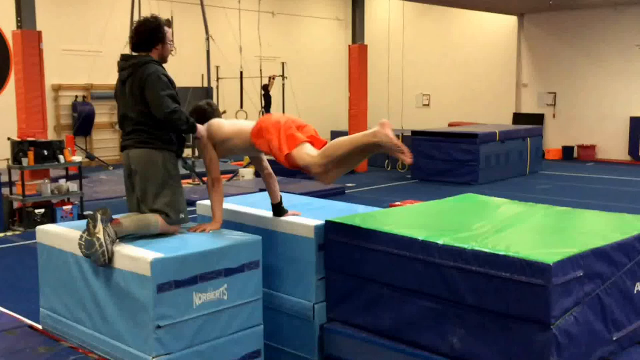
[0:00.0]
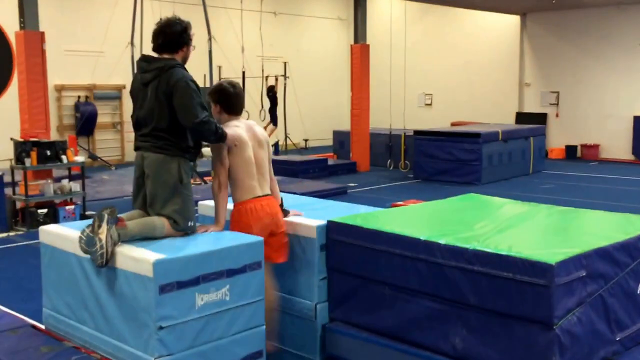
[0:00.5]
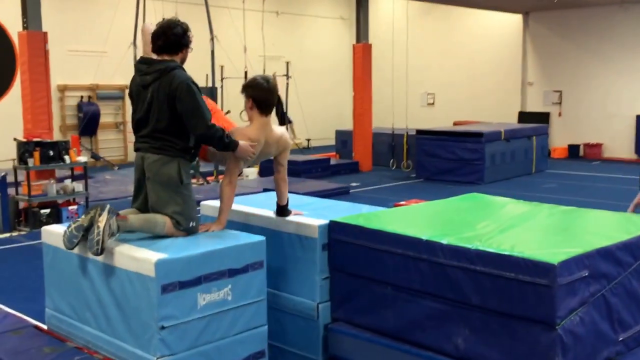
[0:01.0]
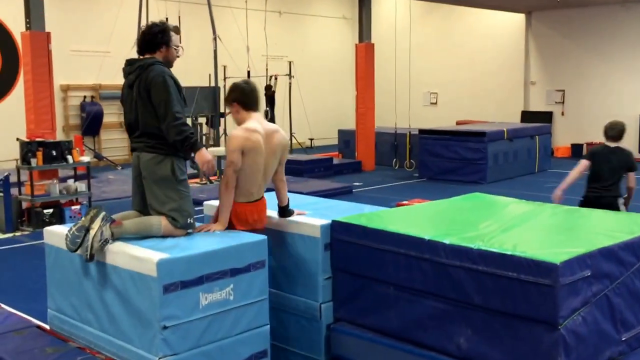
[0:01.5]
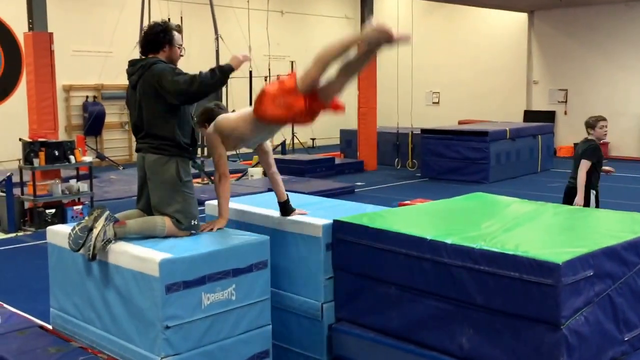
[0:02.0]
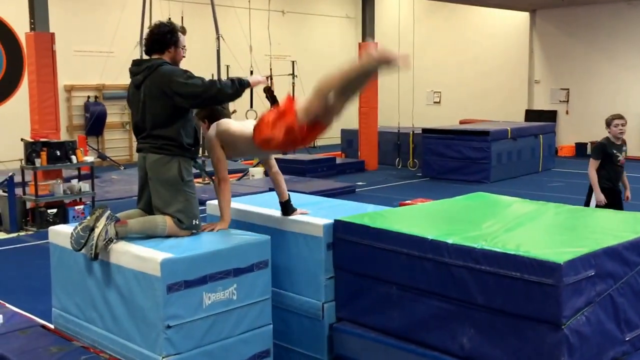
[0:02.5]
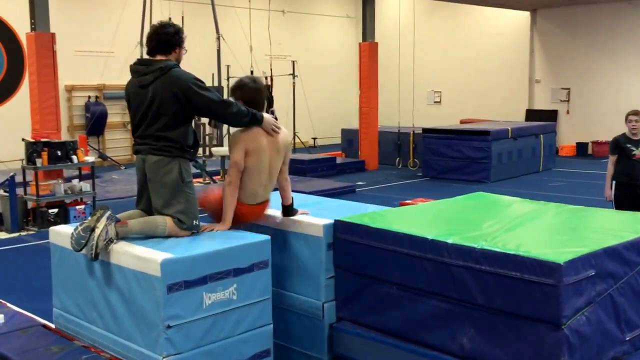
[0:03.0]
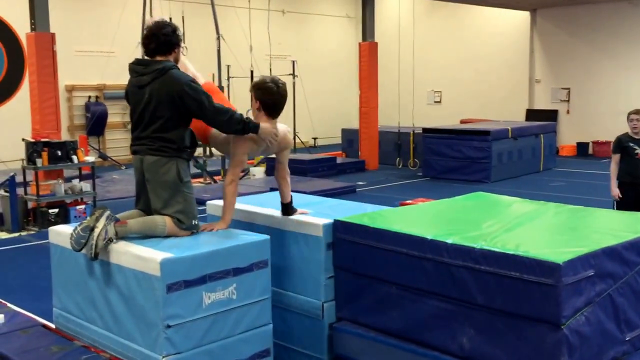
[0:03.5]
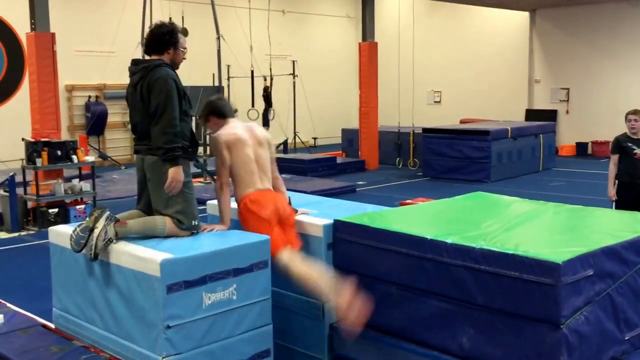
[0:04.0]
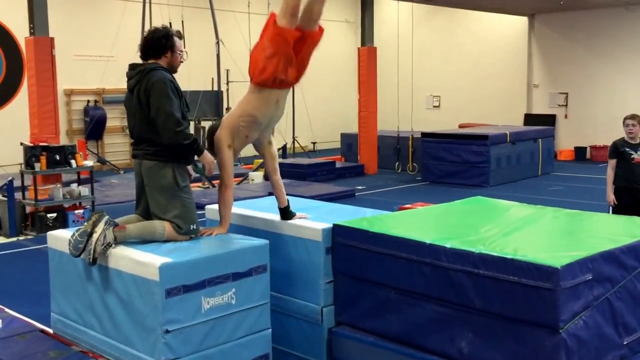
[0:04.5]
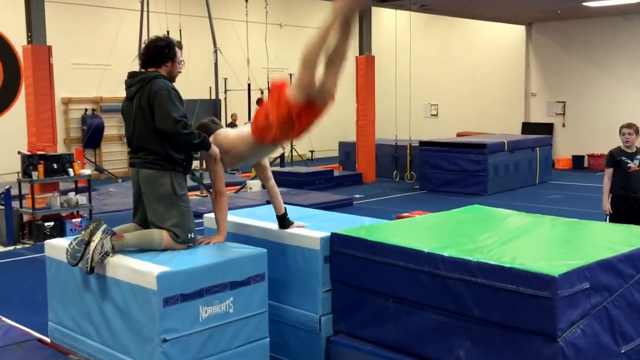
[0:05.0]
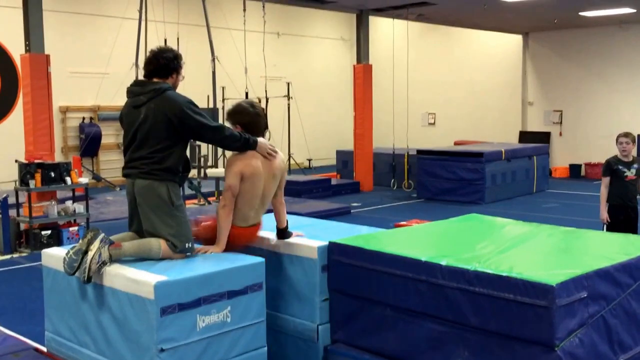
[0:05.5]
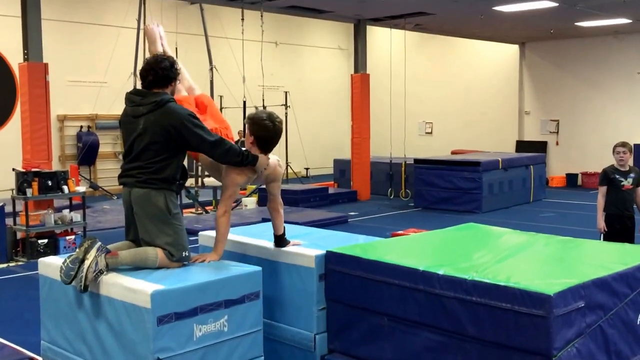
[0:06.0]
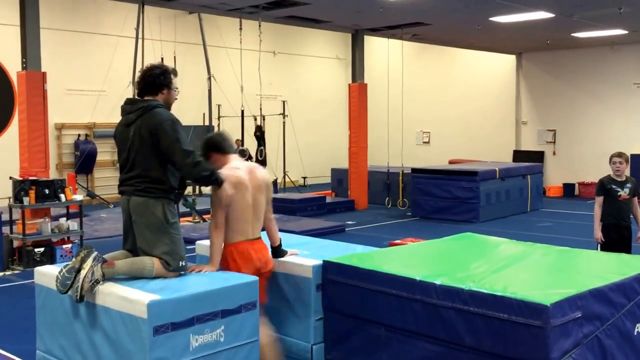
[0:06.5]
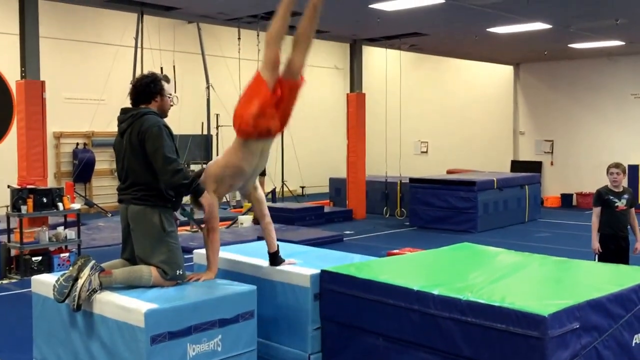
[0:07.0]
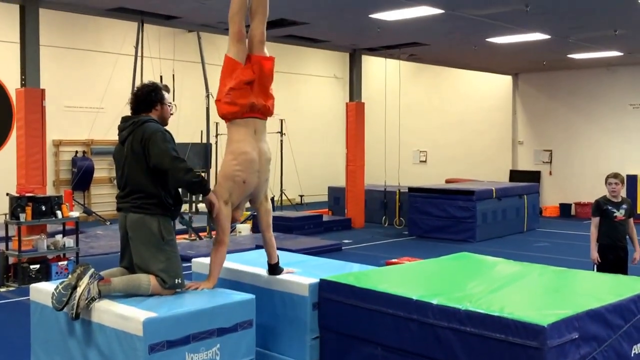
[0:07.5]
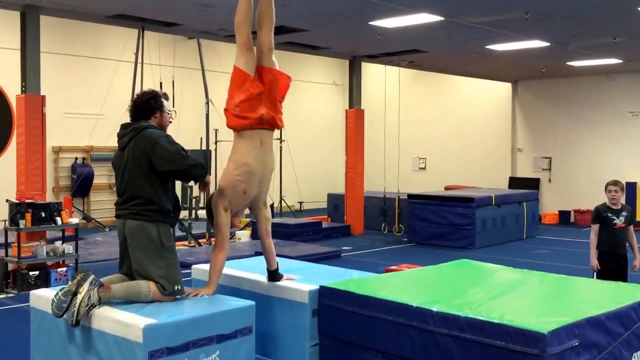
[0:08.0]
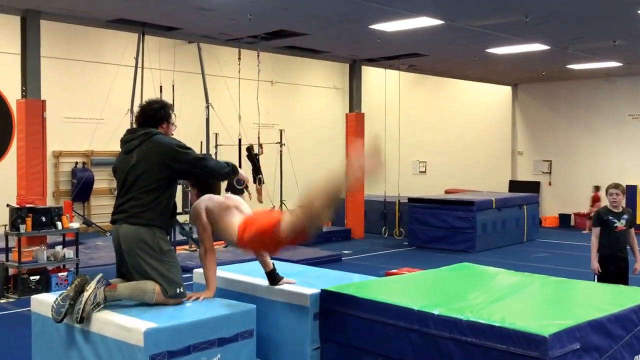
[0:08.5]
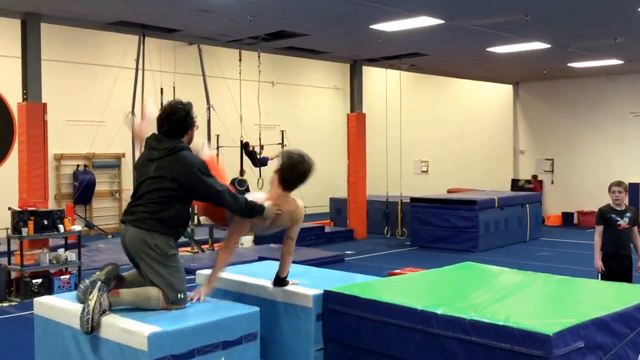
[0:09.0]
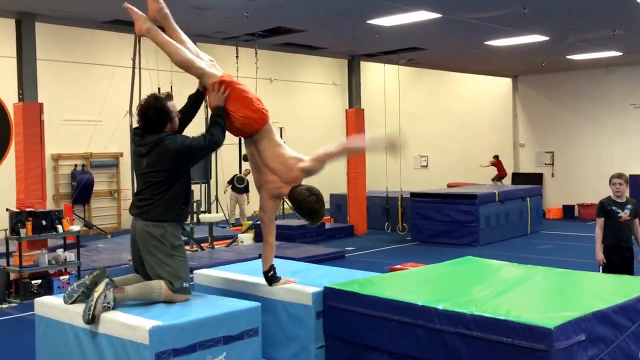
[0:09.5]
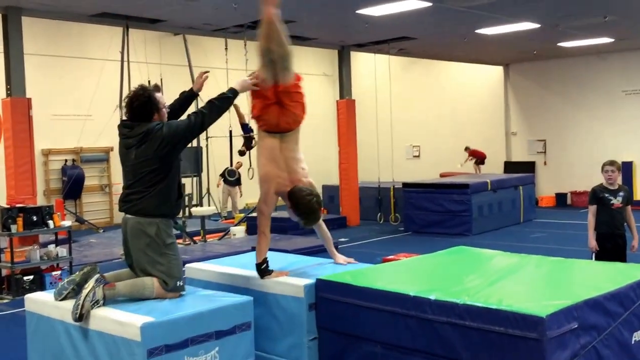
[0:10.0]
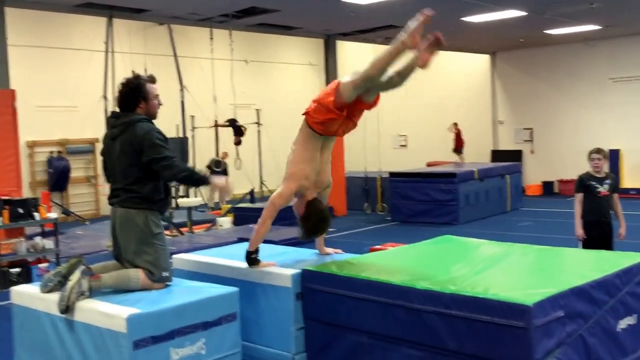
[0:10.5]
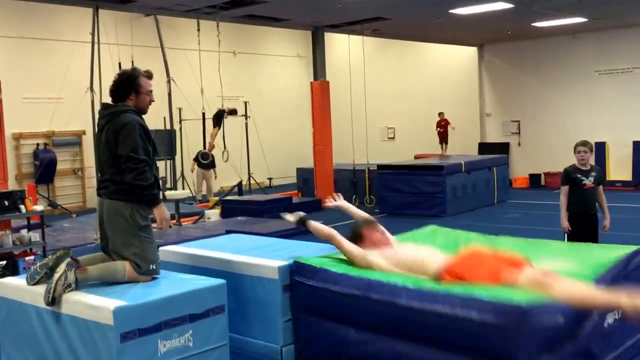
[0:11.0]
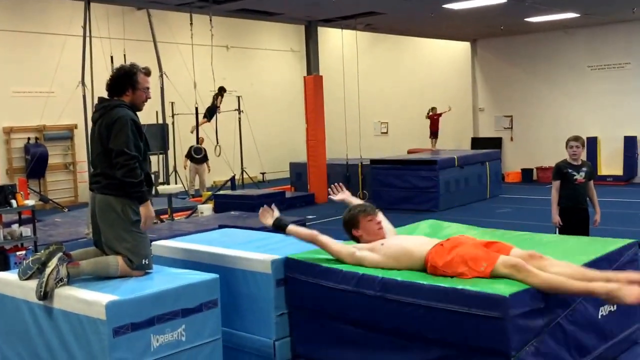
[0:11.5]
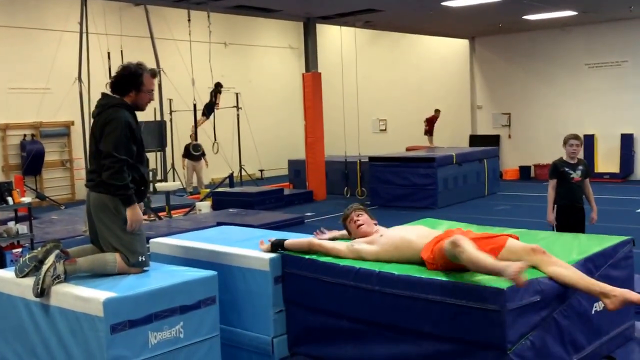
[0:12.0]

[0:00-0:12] A young man trains gymnastics with a coach. He works on two sets of tall mats, about three feet high, as though he is on vaults; he spins and then lands on a stack of mats. The entire floor is covered in mats, and the place looks like a gym for gymnastics. The support beams are covered with mats as well, and stacks of mats are located throughout the facility. There are also some beams on the far end of the wall. The coach kneels on one set of the mats on the young man's left side and guides him as he swings to make sure he is in the right position and form.